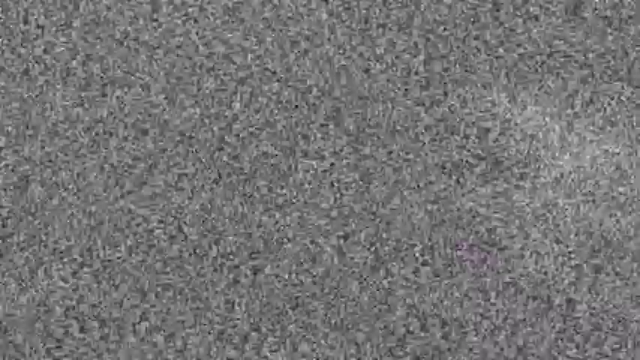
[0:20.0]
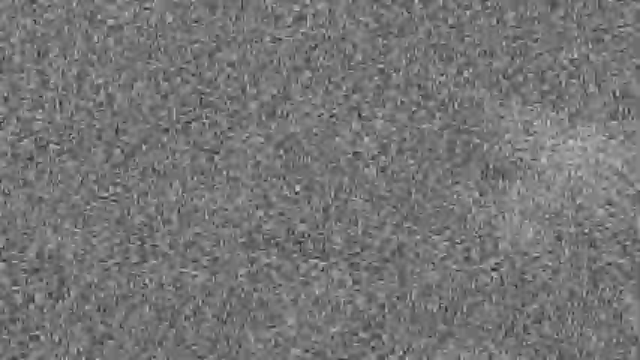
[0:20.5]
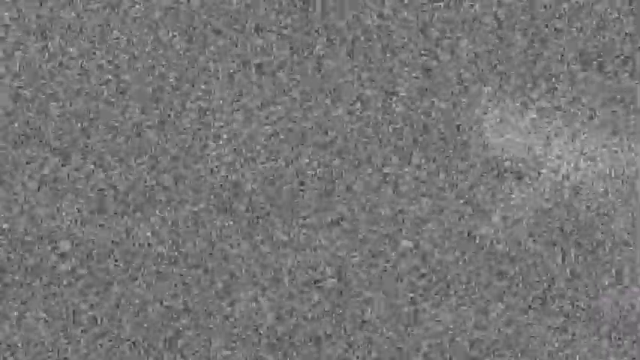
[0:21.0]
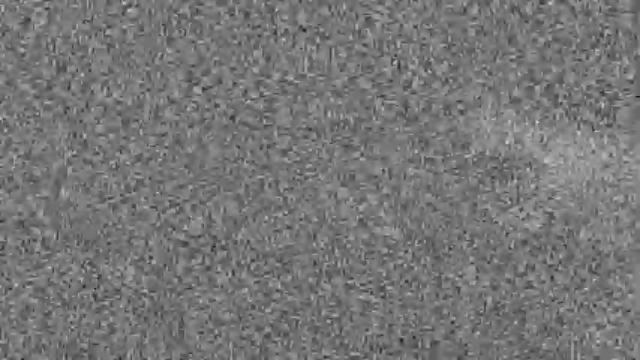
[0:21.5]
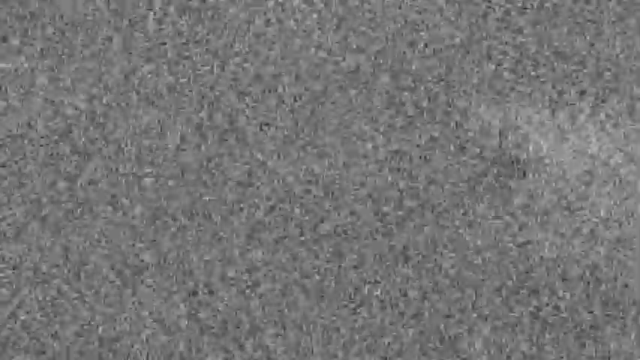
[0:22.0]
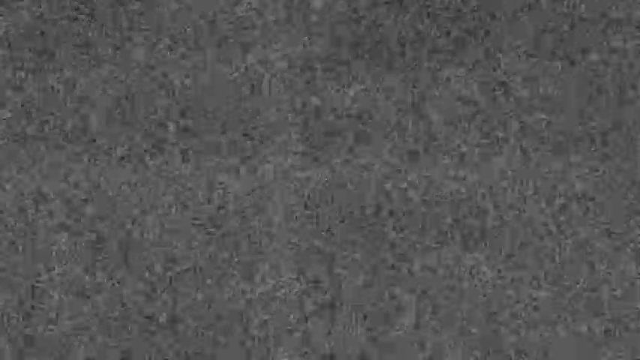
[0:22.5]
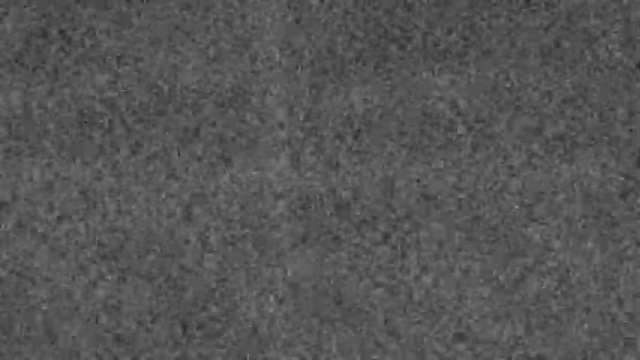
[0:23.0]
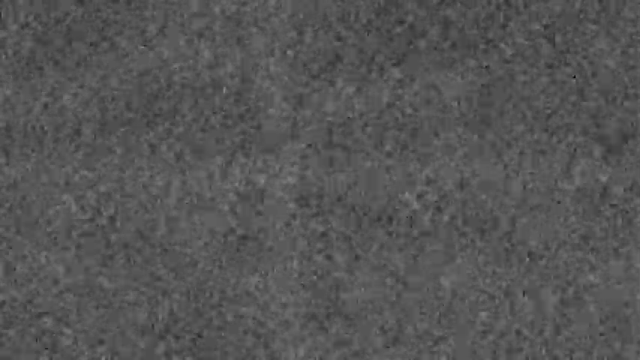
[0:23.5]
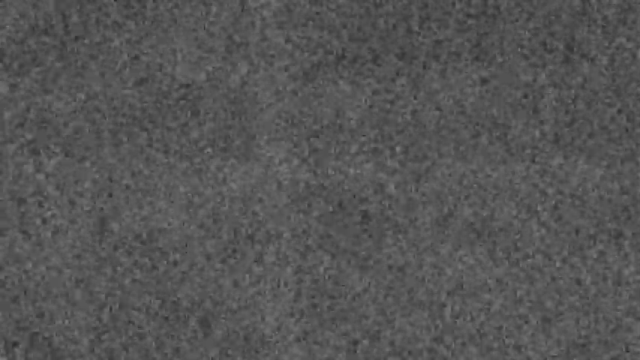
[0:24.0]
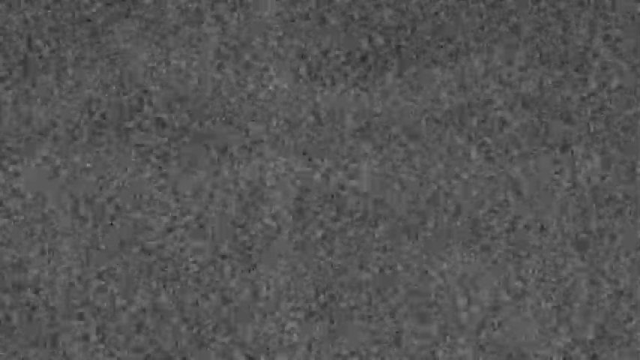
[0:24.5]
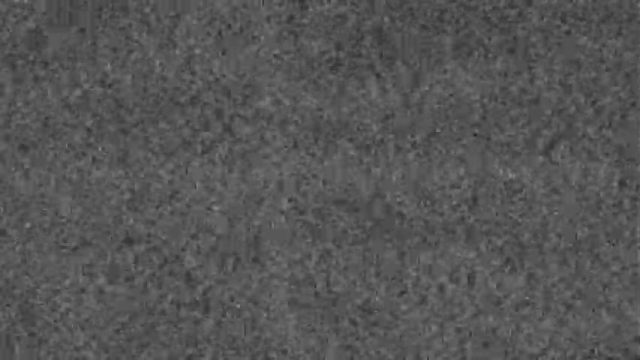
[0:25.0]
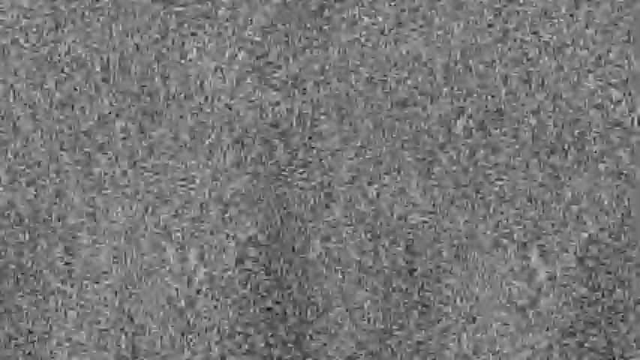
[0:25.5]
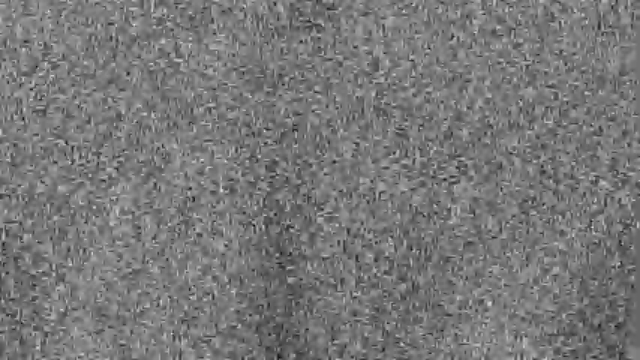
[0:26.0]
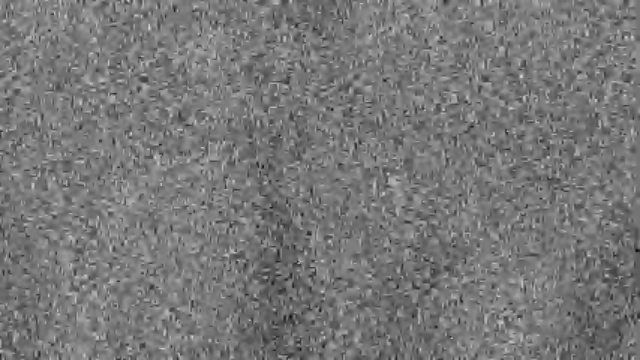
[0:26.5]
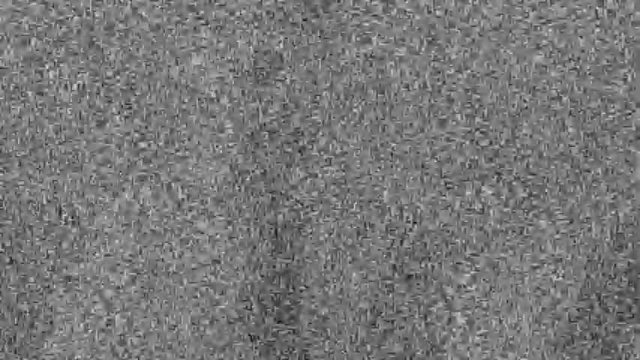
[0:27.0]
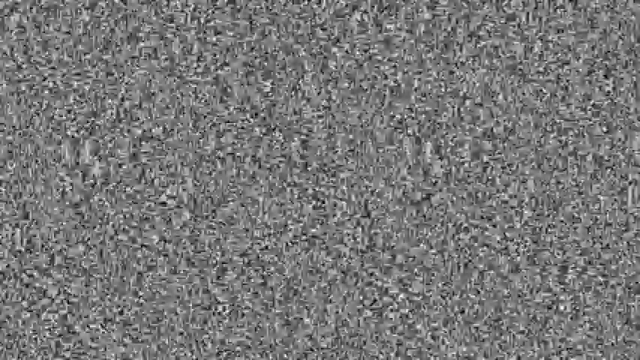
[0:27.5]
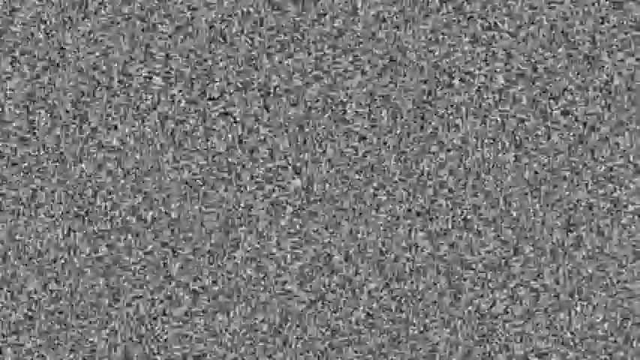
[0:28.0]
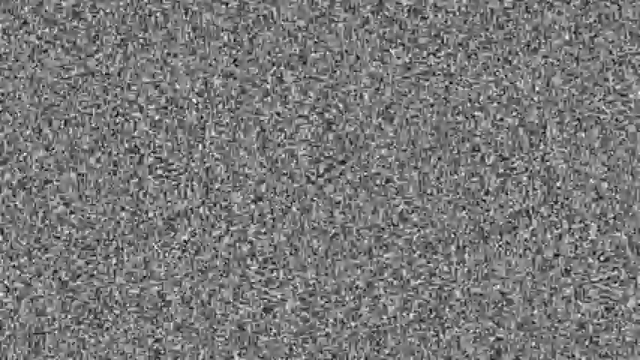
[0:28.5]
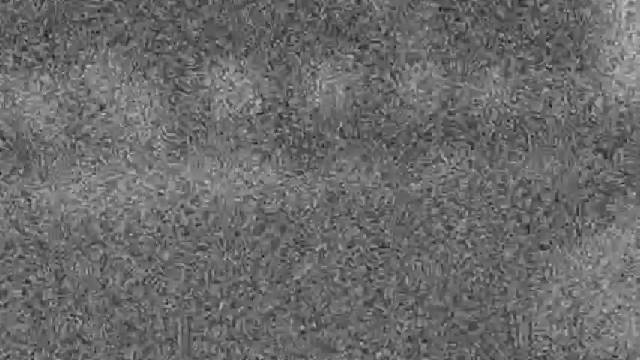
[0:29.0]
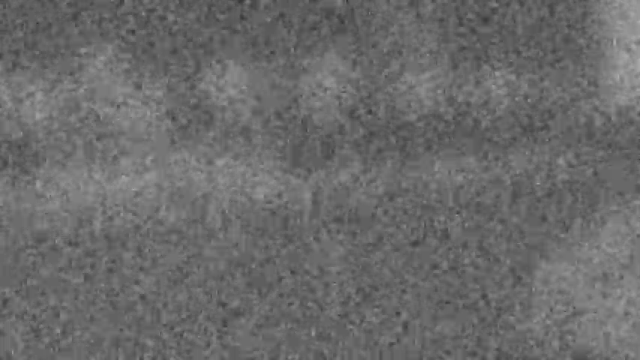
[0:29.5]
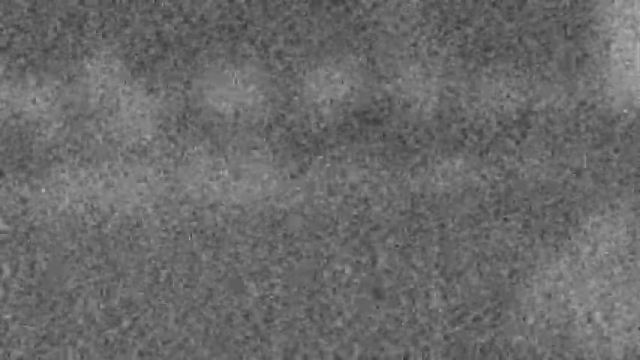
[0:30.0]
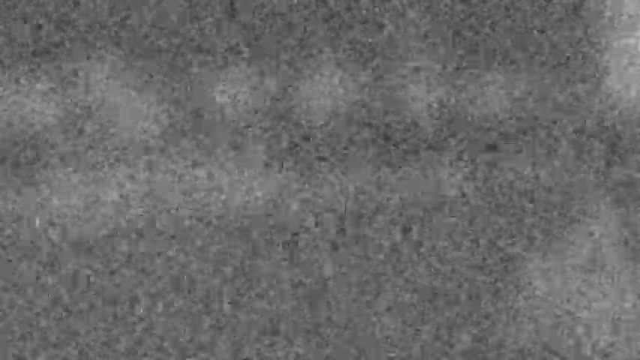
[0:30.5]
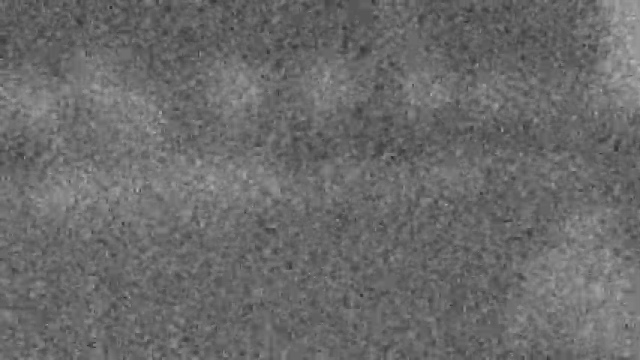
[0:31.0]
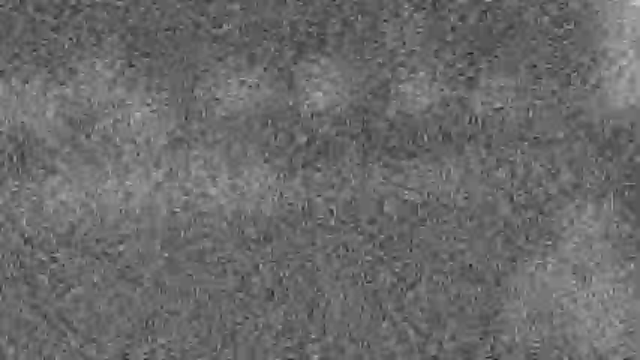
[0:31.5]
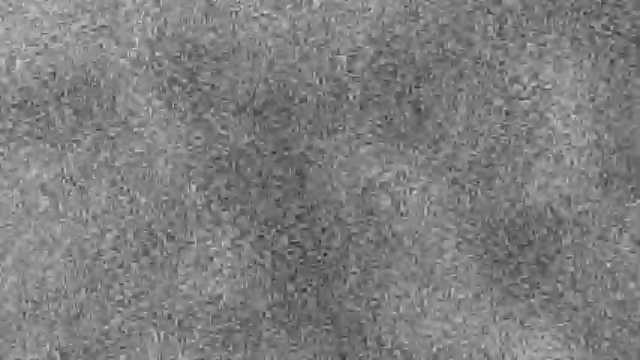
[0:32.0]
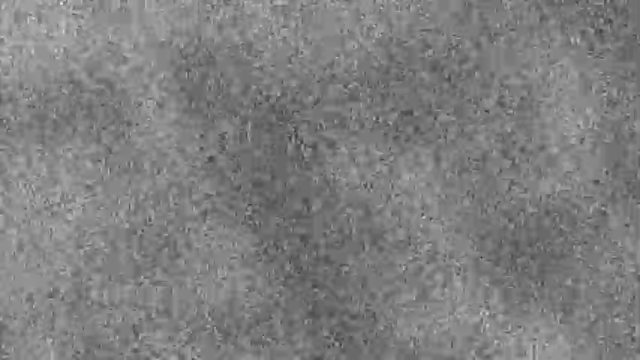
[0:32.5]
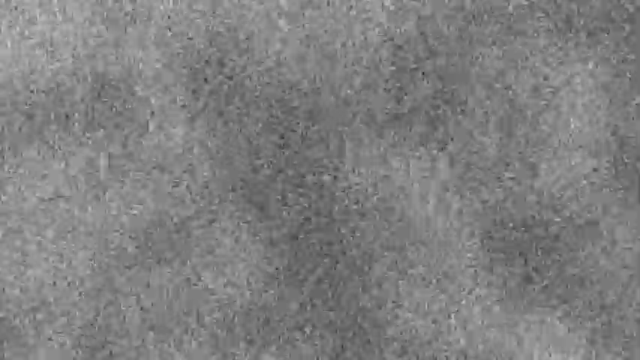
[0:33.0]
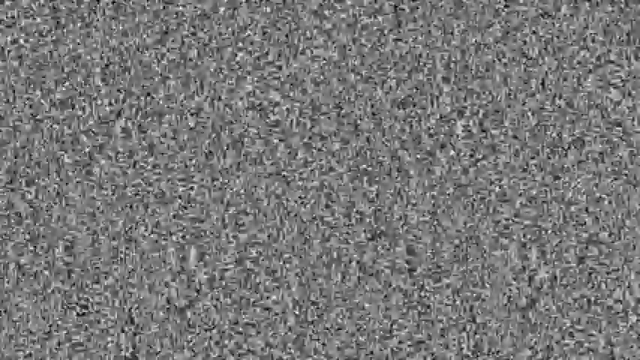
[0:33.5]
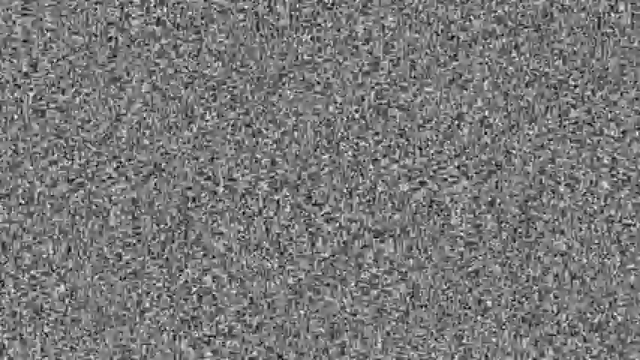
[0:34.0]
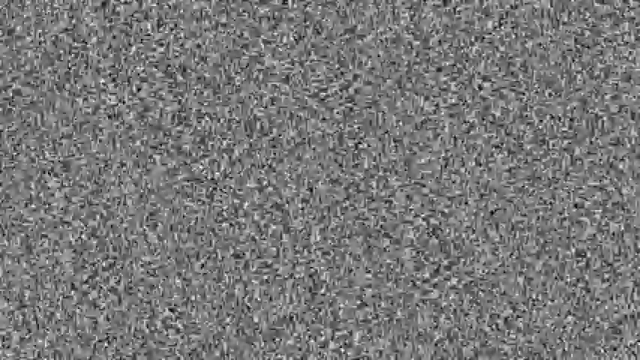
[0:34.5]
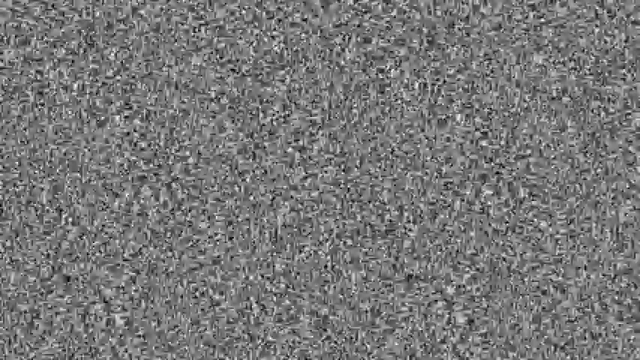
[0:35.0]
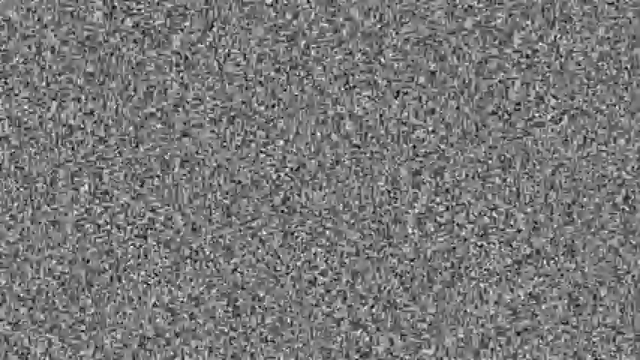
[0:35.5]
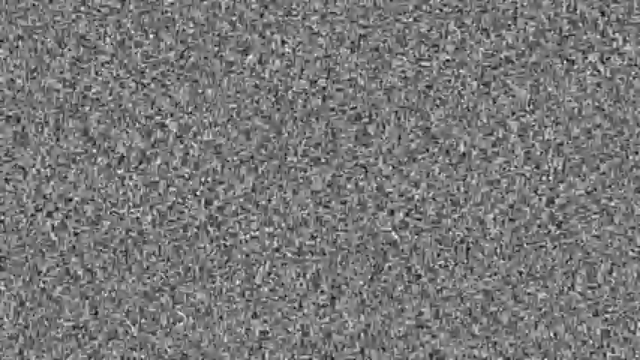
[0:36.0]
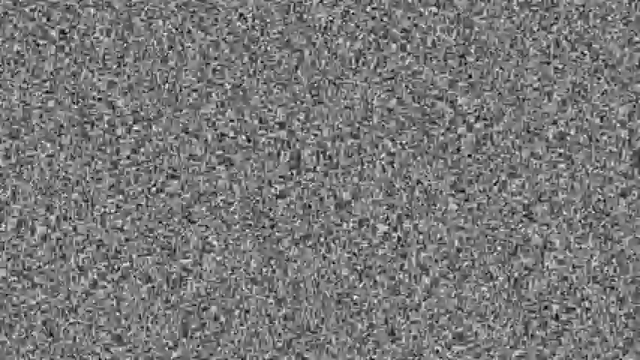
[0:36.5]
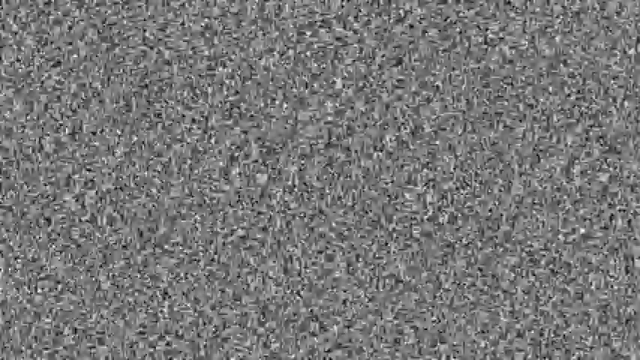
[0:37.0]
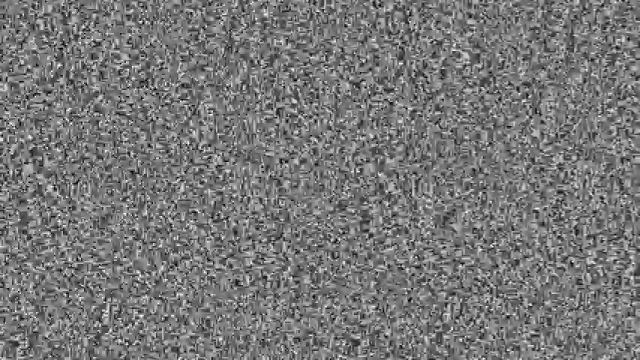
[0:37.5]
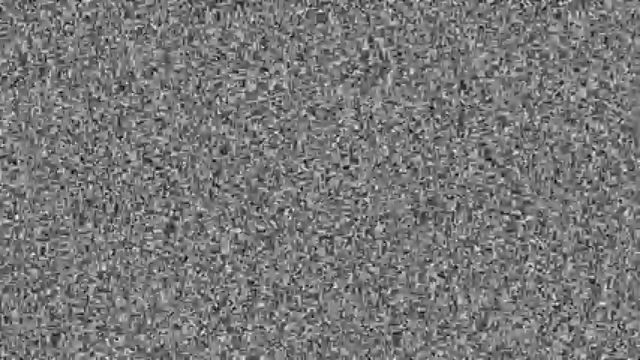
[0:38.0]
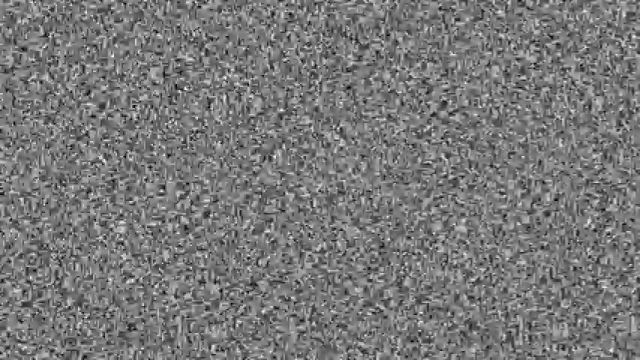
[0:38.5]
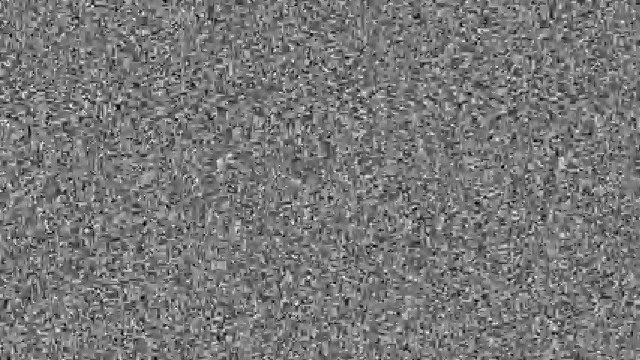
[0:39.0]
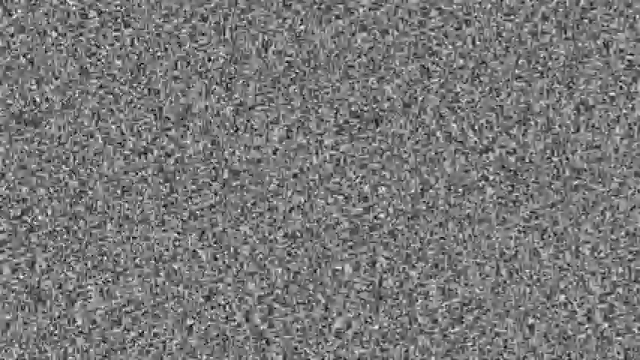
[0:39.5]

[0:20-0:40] Gray static continues. For a second it seems like one solid block of gray with outlining layers of static on the outside, then it turns into a denser, grayish format. It seems to fade out, get lighter and change into something else, then returns to very dense static. It seems almost as if someone is trying to tune the static image into something or clear it up. Briefly some partial figures can be made out, with not much in the background, and then it fades out and becomes very dense again. The format seems similar, but it does not appear to show the same images or silhouettes twice, seemingly following a different pattern. At the start there seems to be a stick-like figure in the background that looks like a very faded fence.